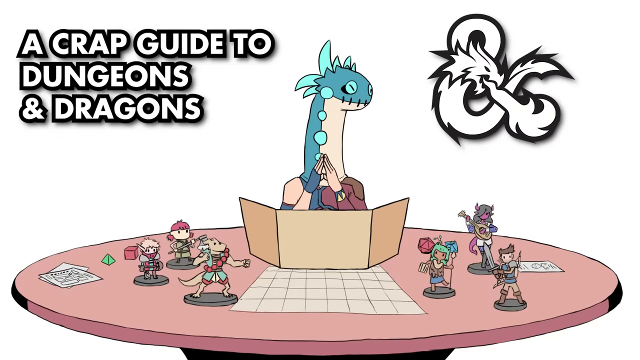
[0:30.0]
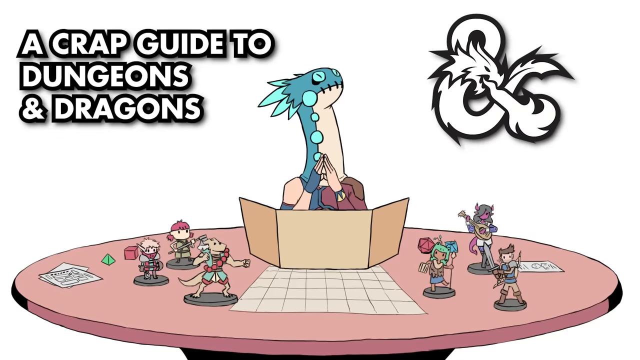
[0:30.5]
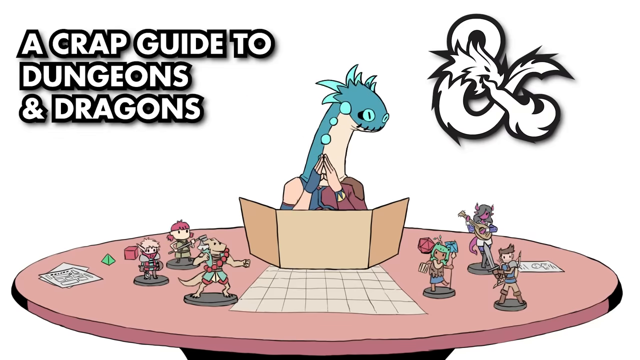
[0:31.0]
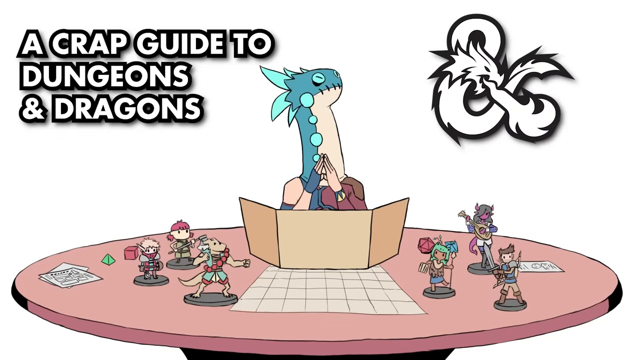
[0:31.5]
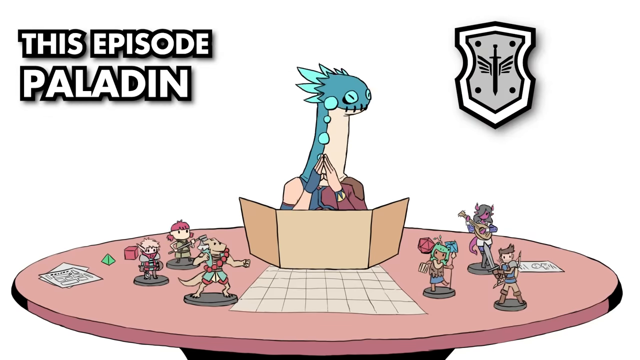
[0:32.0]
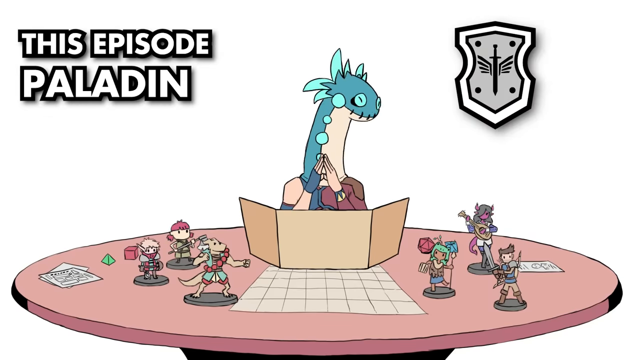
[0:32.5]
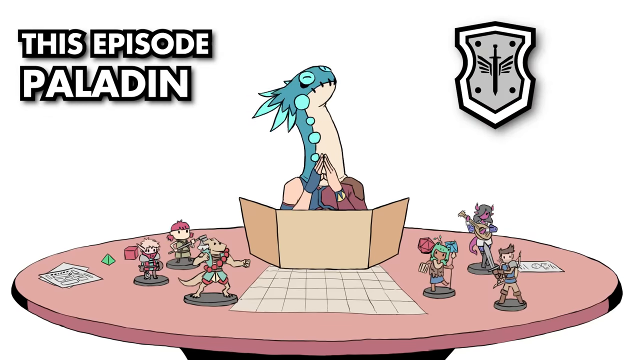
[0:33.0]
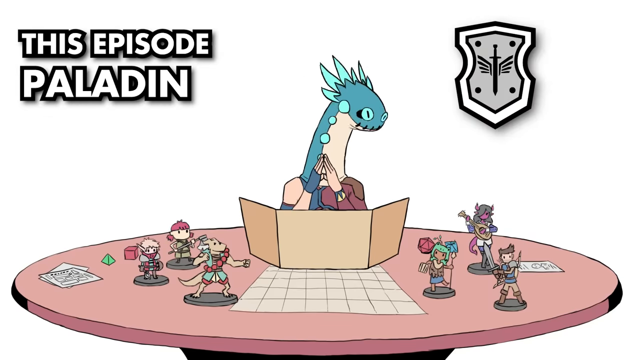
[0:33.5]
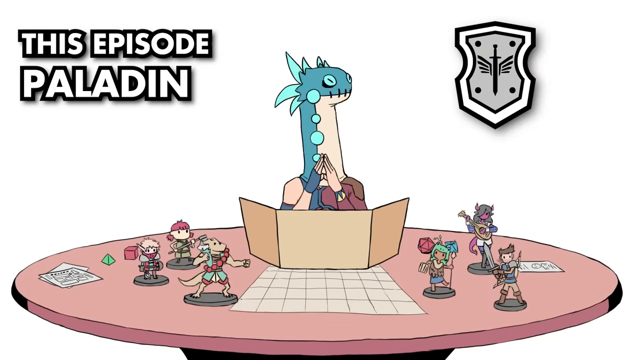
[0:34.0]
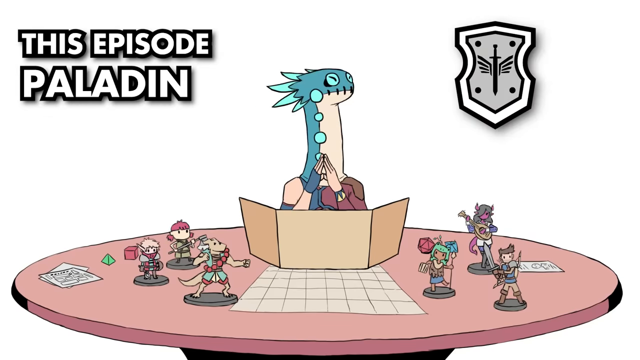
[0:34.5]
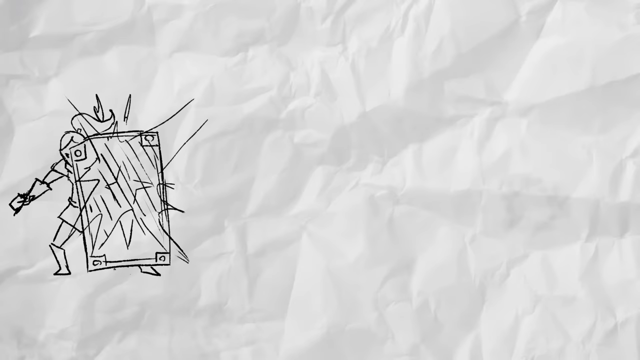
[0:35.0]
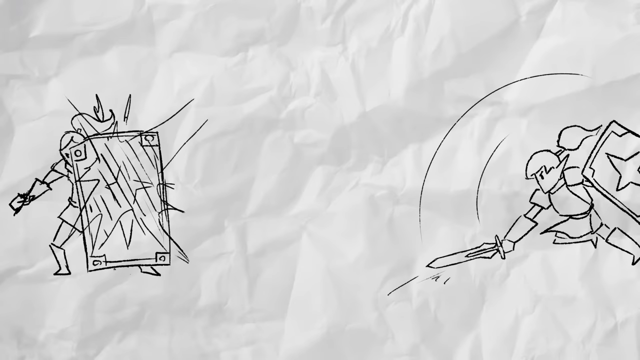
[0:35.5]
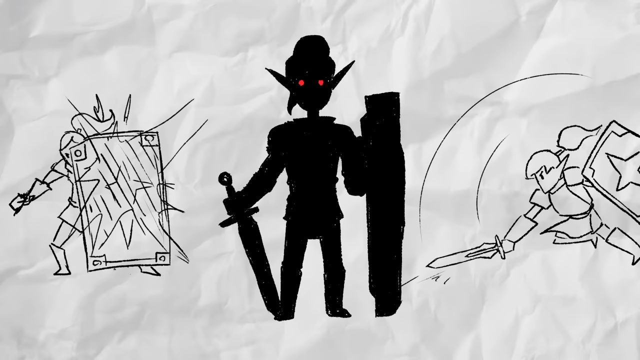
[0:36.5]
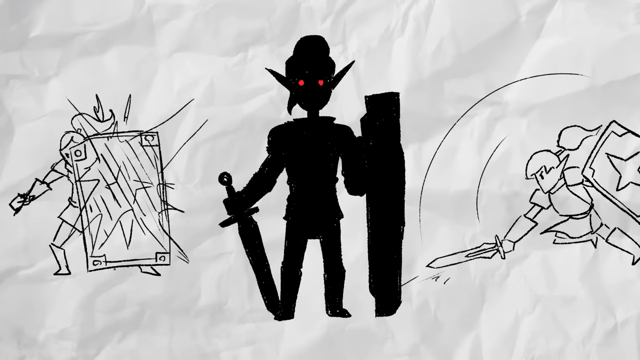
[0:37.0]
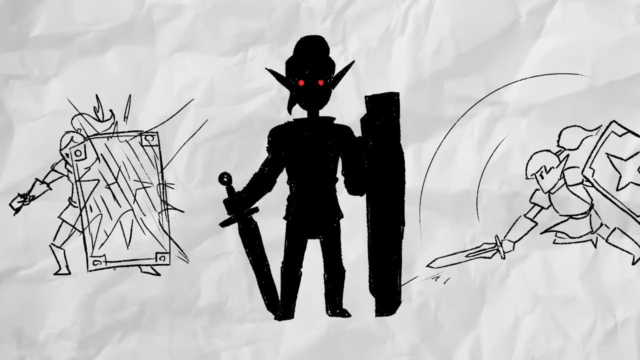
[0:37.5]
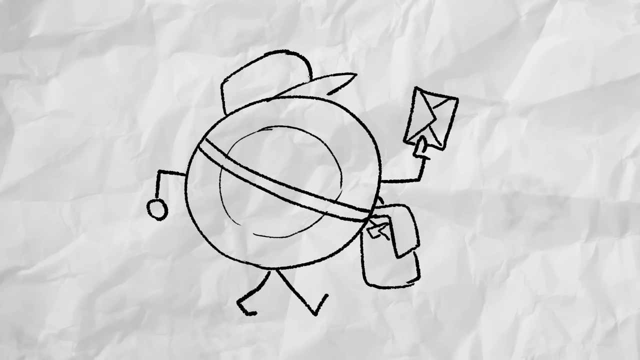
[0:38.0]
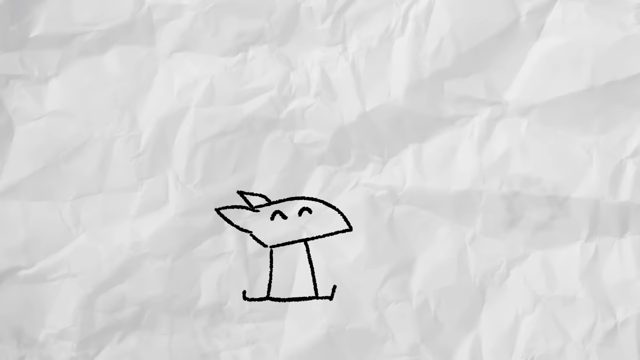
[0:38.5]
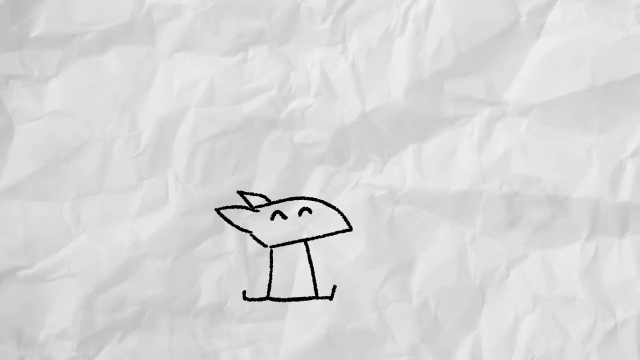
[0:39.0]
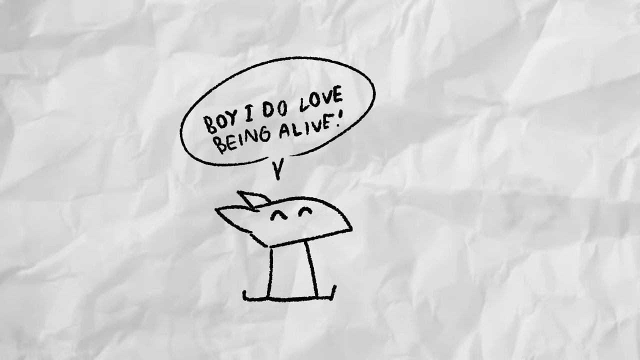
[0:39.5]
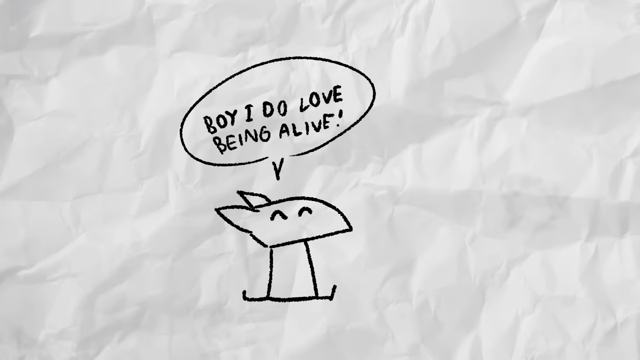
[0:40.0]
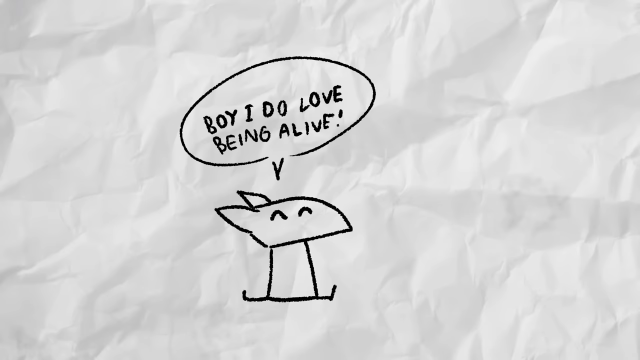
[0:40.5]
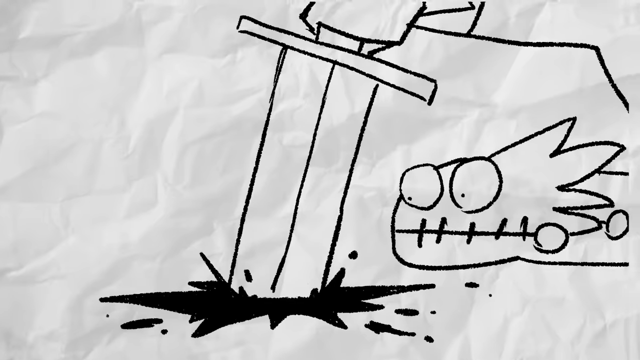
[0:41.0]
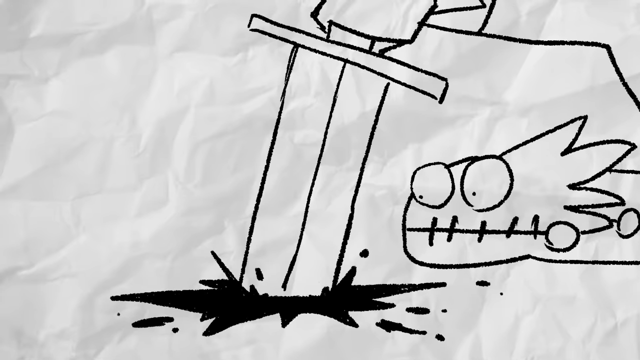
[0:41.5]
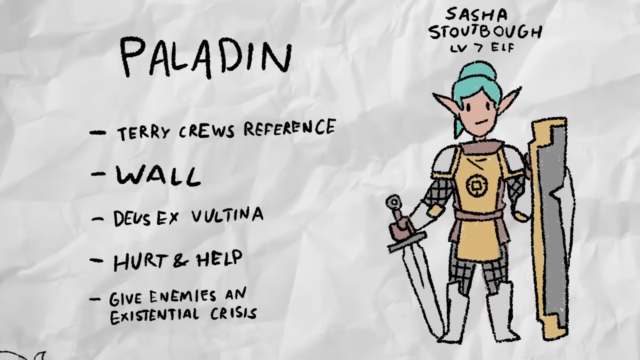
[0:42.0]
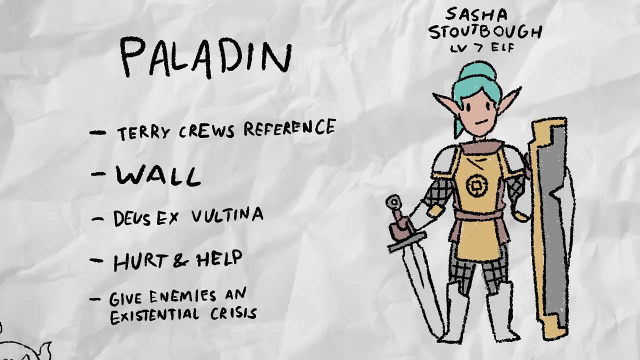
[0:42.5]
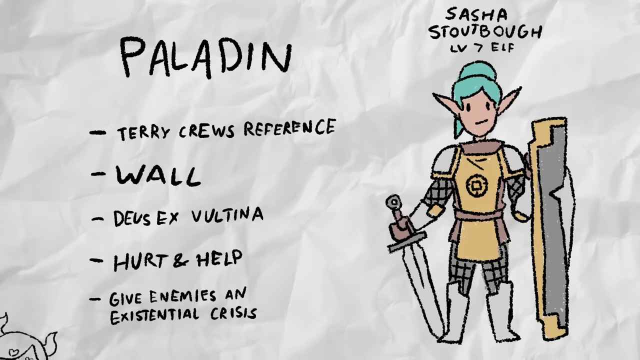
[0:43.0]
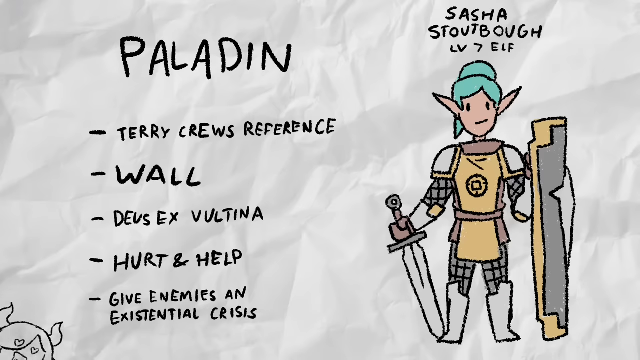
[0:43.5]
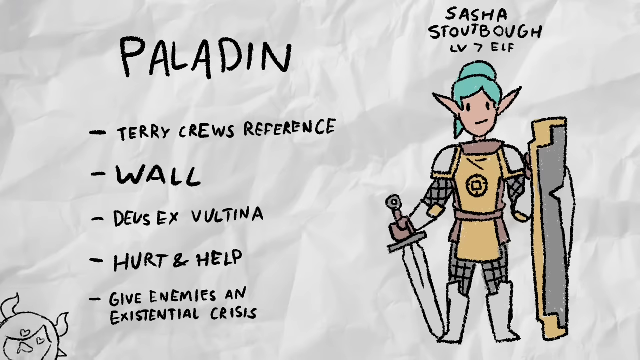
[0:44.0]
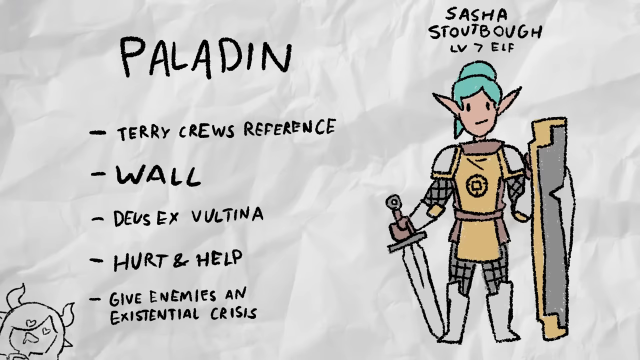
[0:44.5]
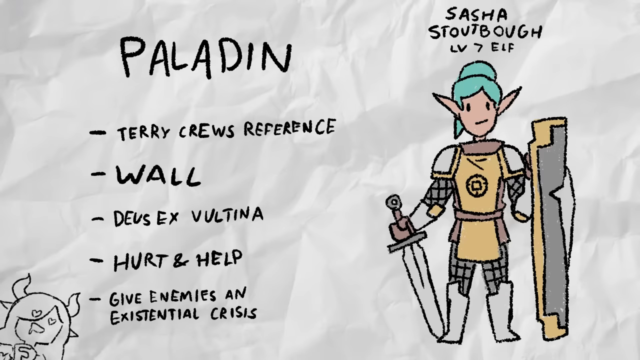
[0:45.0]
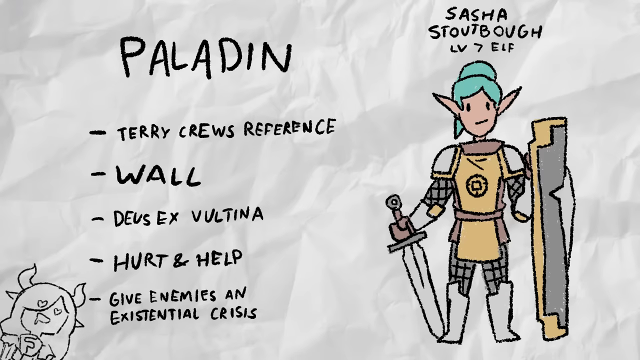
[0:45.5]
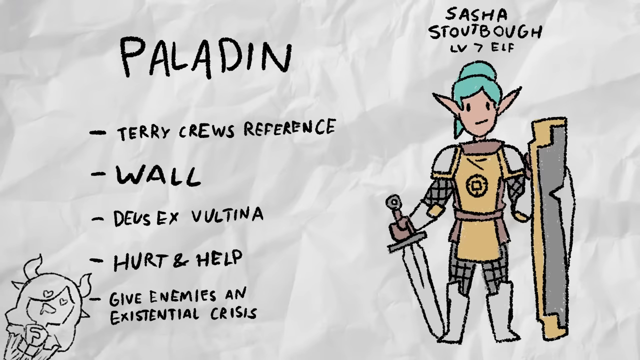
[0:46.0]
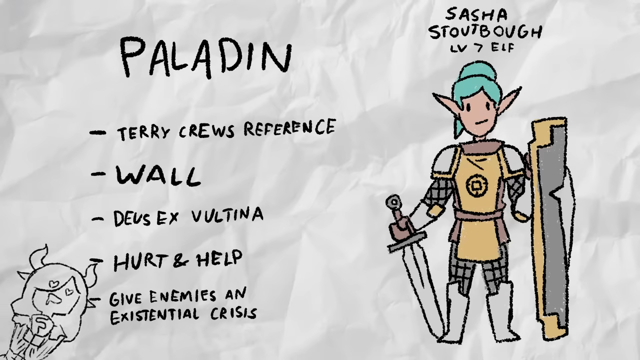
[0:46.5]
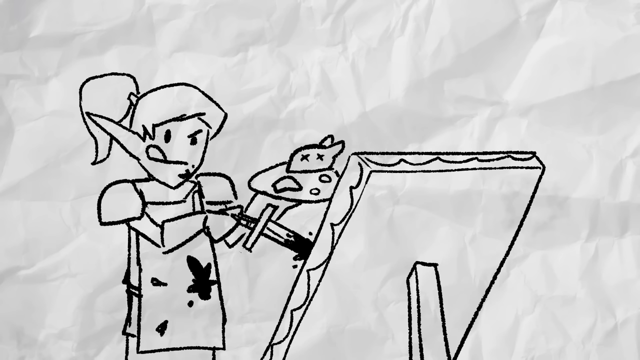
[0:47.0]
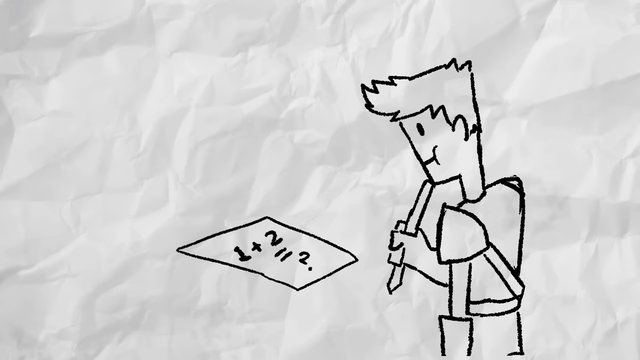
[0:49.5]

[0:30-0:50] On a solid white background are colored drawings: a dinosaur at a table with a flat piece of paper, sort of like grid paper, and another cardboard piece of paper in front of him. A bunch of different action figures are on the table. White and black text in the top left corner says "a crap guide to Dungeons and Dragons." The character moves his head back and forth, and text in the top left says "this episode, Paladin." The scene transitions to a white crumpled paper background, where a character holds a shield in her hand. A man swipes in on the right side, also with a shield and a sword. A black figure with red eyes and a black sword pops up in the center. There is a drawing of what looks to be a person like a mail carrier, holding up some mail in his hand, with something like a satchel. What looks to be a little dog sits with text over his head saying "boy, I do love being alive," and then a sword comes in, killing the dog. More text says "Paladin, Terry Crews reference, Wall, Deuce X, Voltina, Hurt and Help, Give Enemies an Accidental Crisis, Sasha Stoutbow, Level 7 Elf", alongside a drawing of an elf. A character sort of shows up at the bottom left with something like horns on its head and heart eyes. A character draws or paints on a board, apparently using a knife to paint, focused with their tongue out of their mouth. Then a character does a math thing.